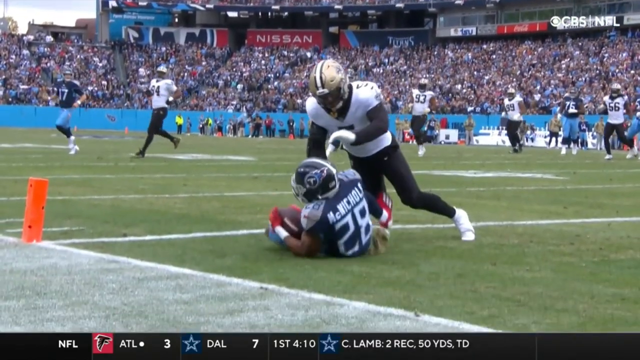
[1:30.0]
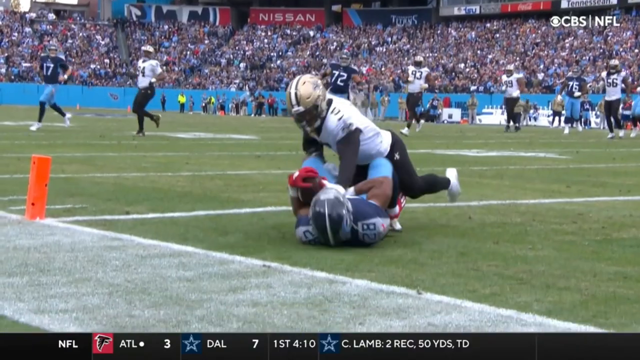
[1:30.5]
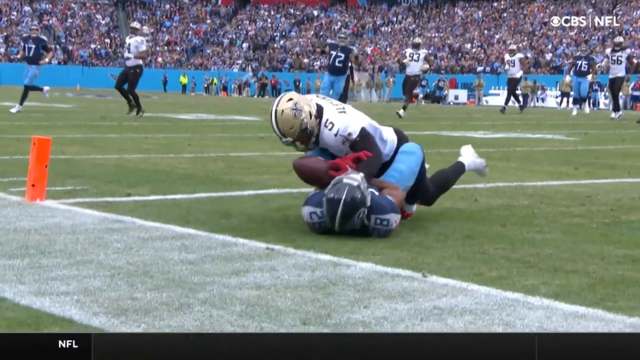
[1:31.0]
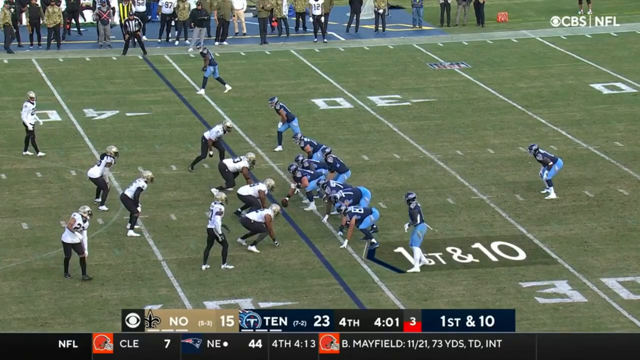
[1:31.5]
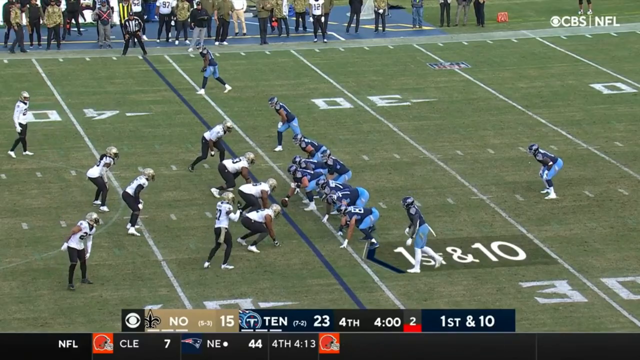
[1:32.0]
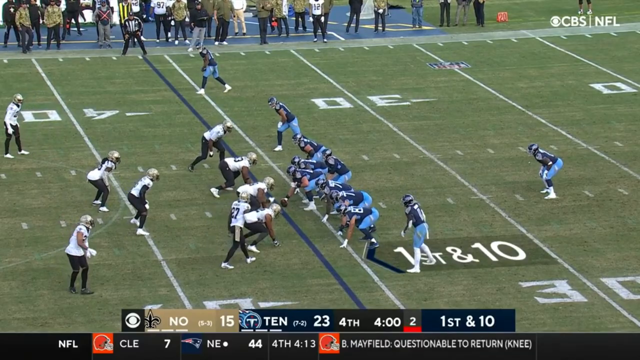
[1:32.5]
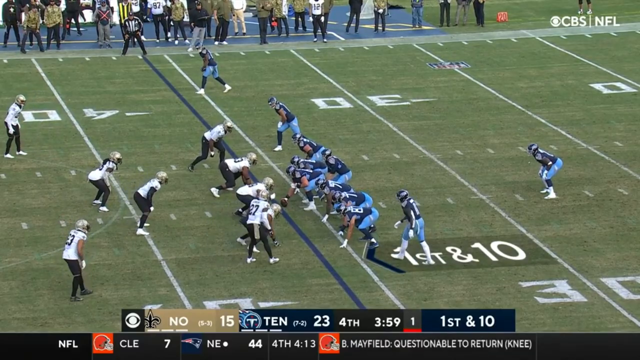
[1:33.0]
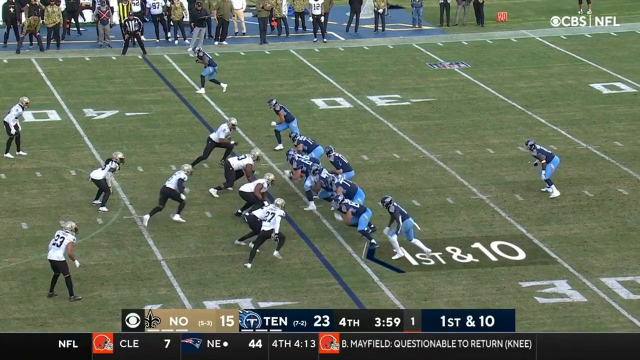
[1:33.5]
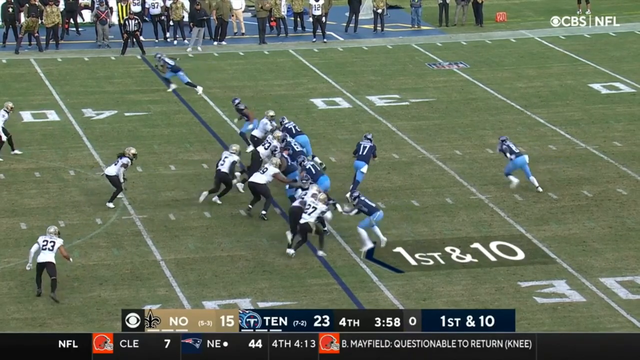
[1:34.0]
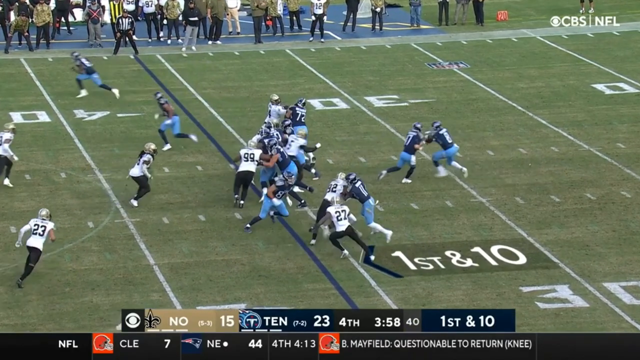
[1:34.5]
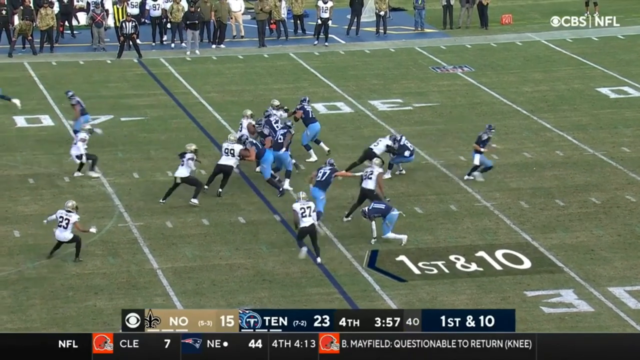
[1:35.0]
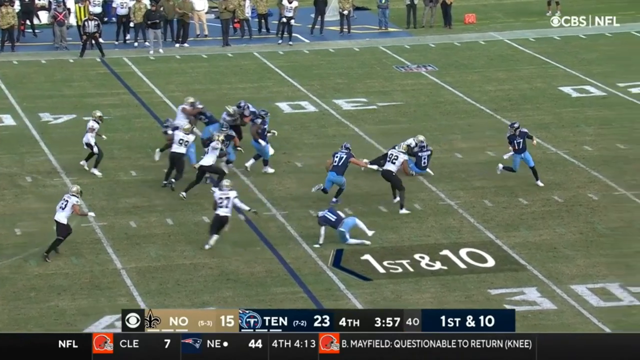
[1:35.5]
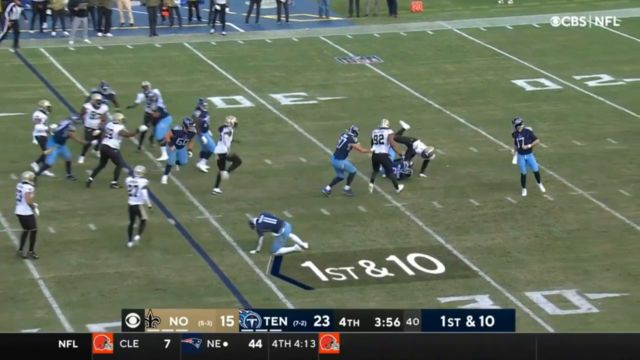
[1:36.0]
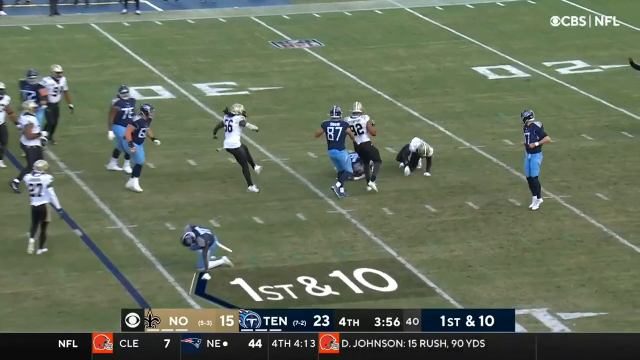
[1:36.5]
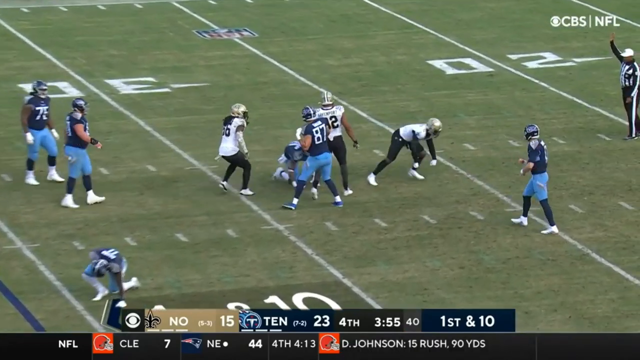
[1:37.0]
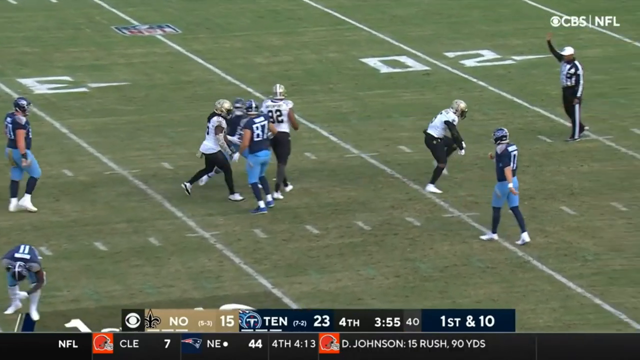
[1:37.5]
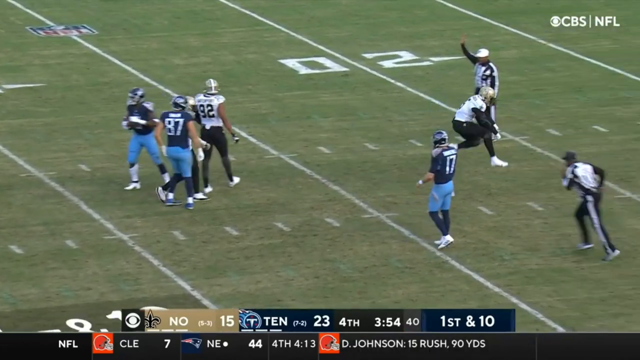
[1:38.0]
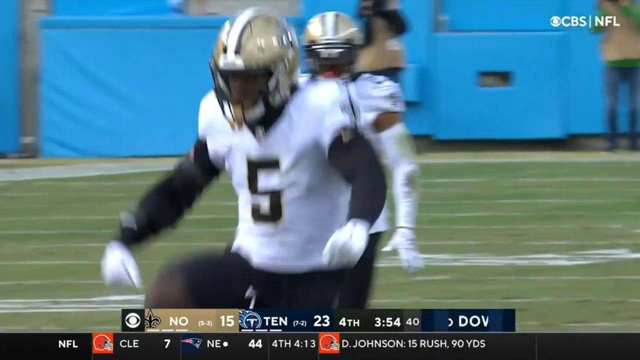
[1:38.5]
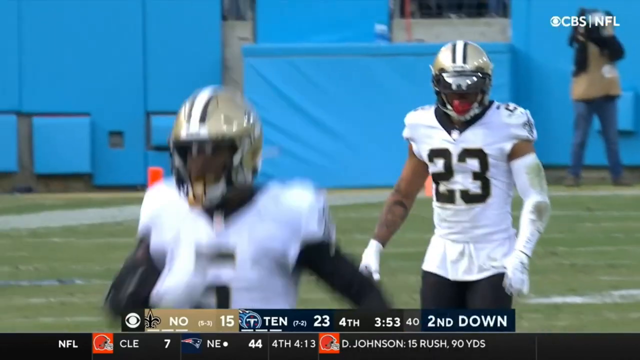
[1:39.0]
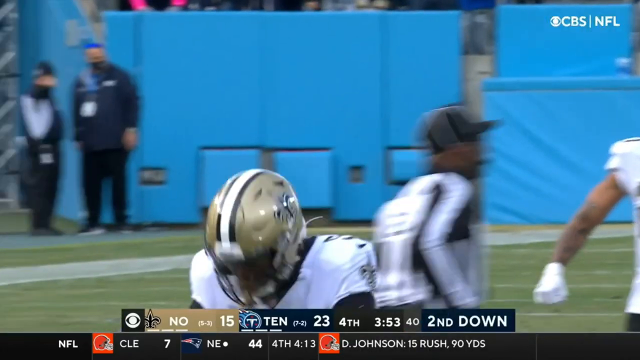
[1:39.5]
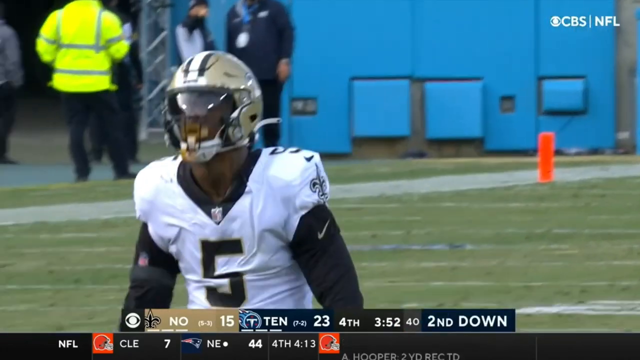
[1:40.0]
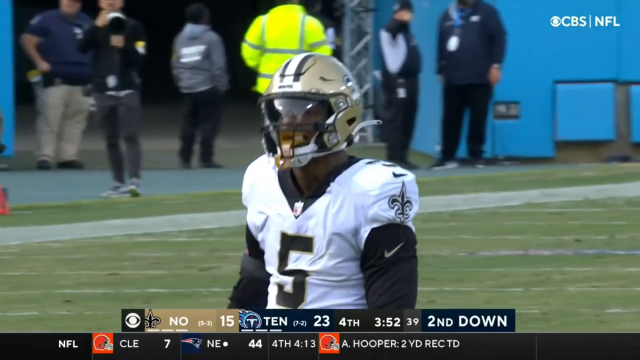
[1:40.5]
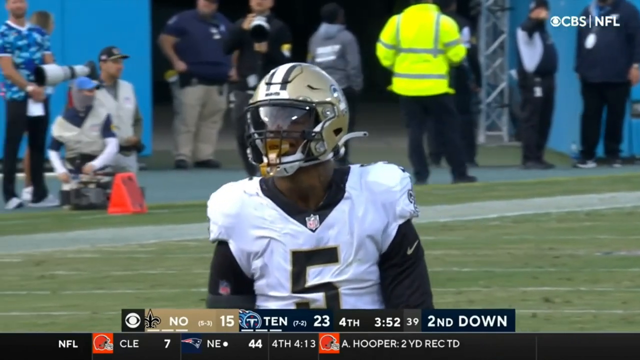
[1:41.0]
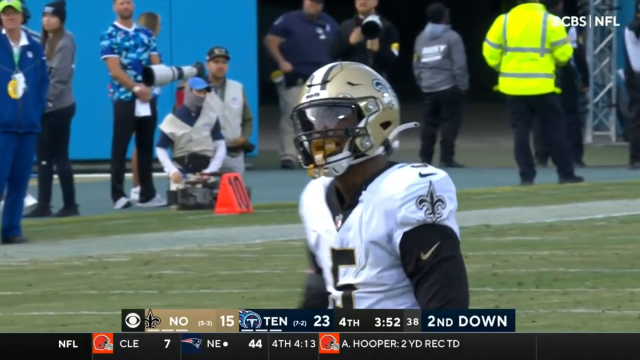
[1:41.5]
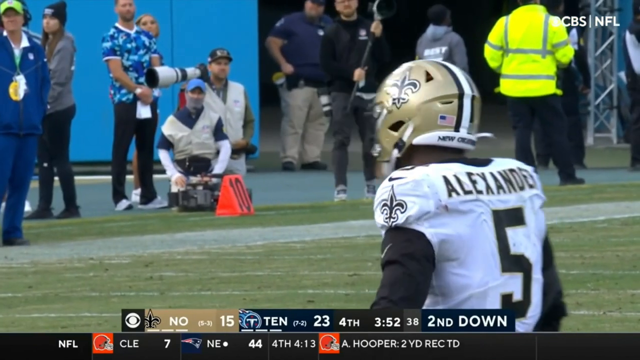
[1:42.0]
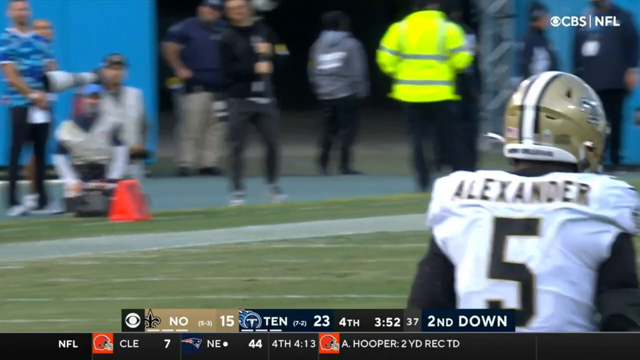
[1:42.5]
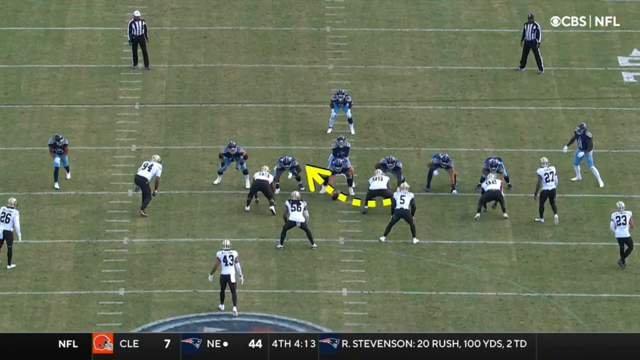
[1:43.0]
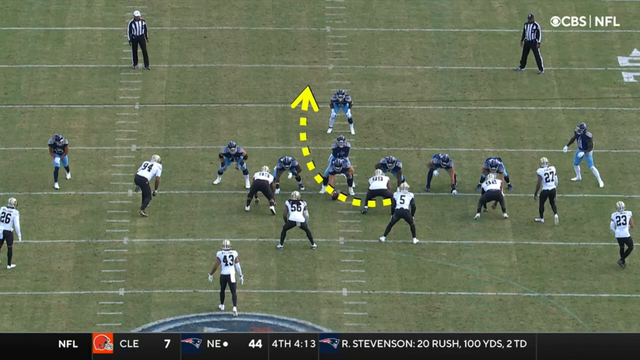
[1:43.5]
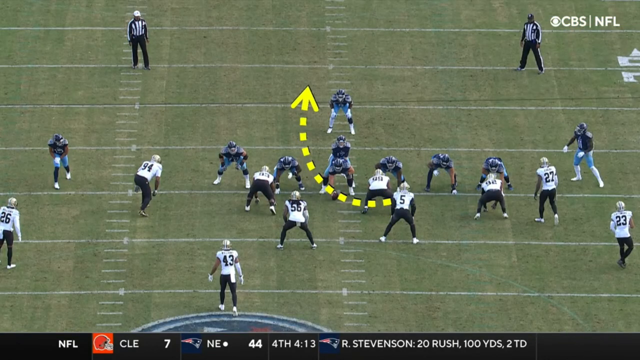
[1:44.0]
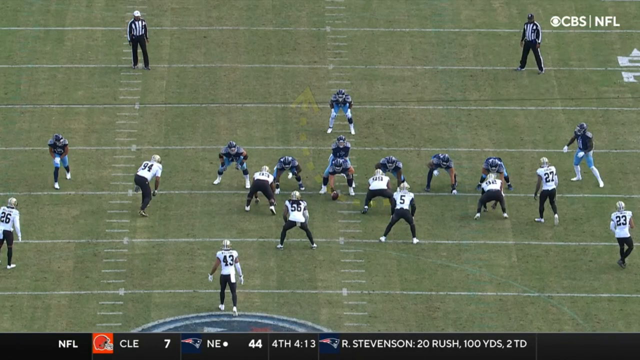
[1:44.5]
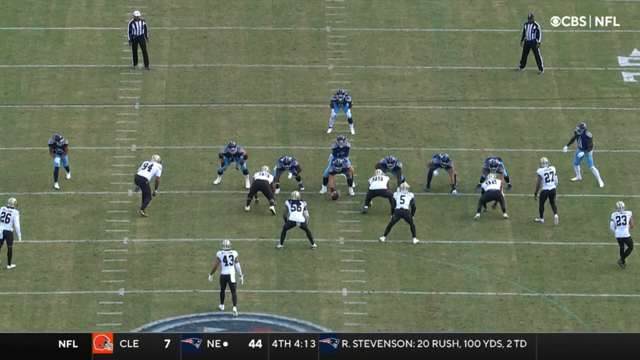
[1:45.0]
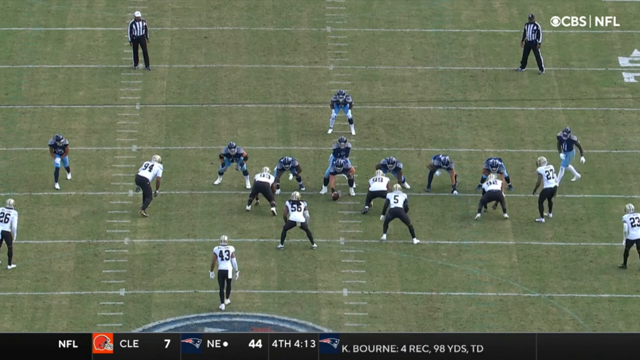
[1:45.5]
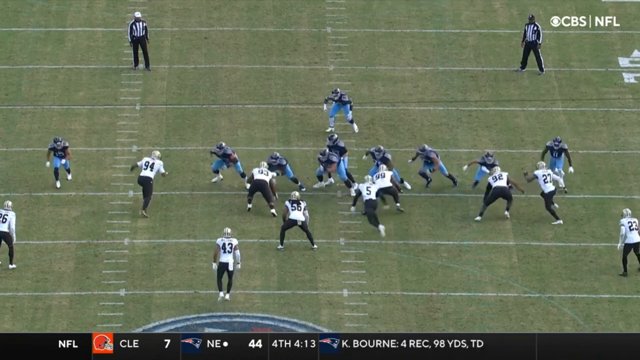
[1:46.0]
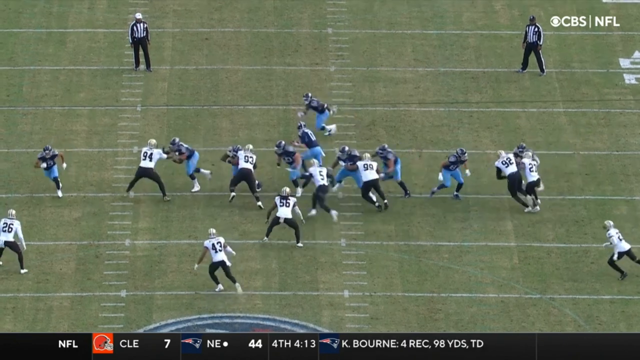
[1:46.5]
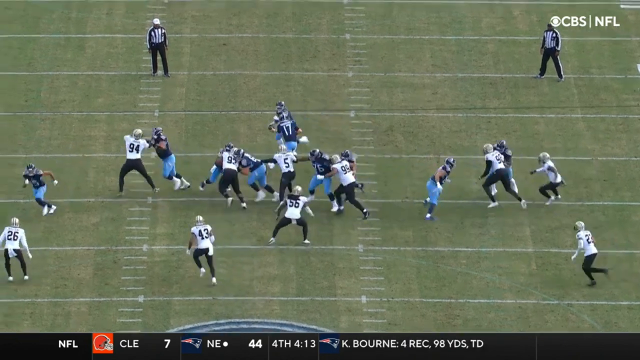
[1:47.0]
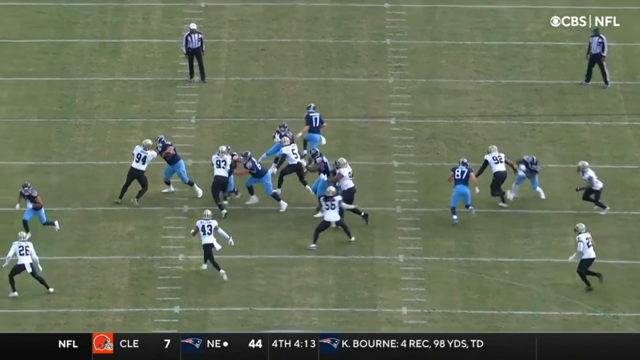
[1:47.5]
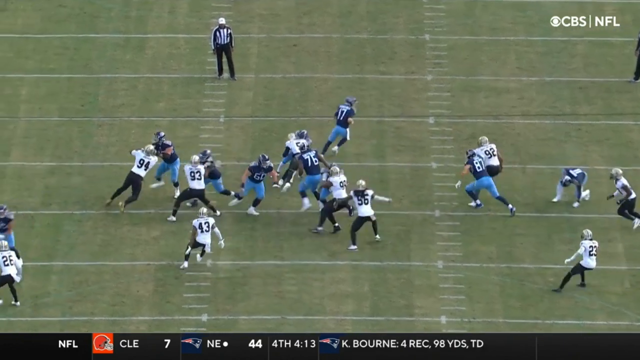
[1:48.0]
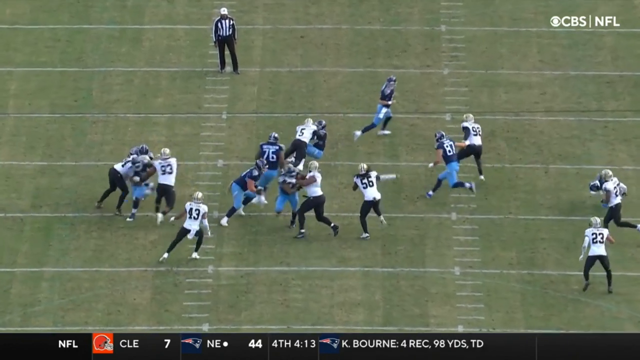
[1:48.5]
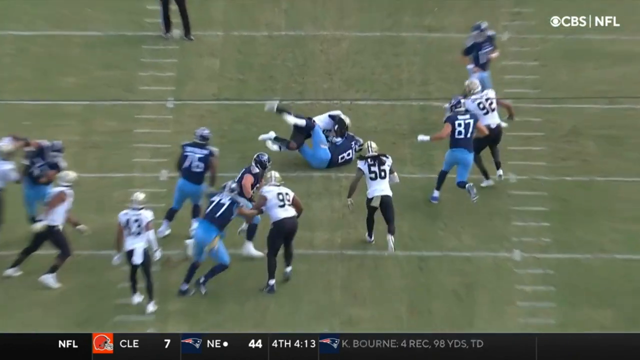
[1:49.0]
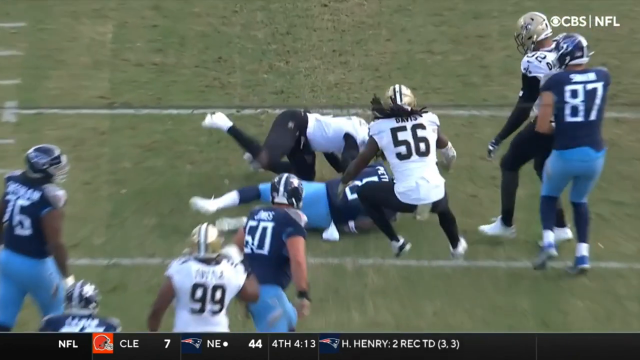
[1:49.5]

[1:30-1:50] Mason Rudolph hands the ball off to a Titans running back, number 8. The Saints defense reads the play and obliterates the running back; it is number 5, Jarrett Alexander, who finds a hole in the pass rush and has a clear path to bring down number 8. The Titans wear dark navy blue, and the Saints wear white with gold helmets.